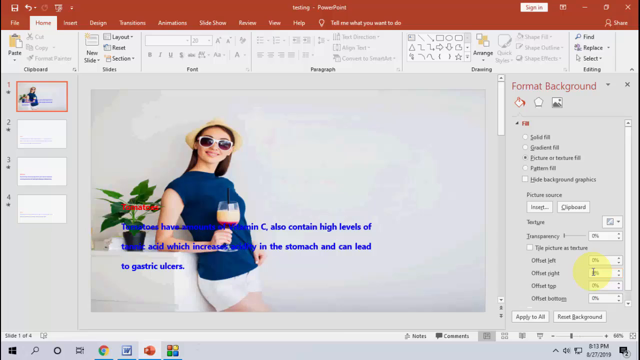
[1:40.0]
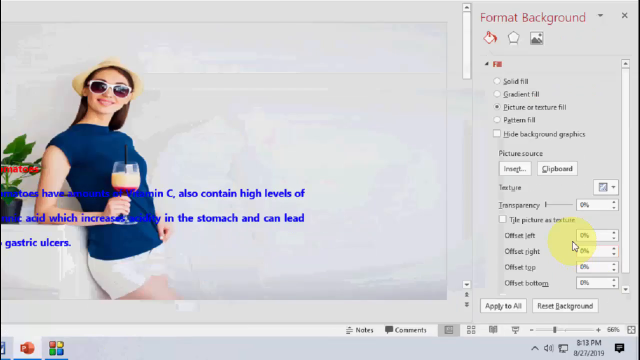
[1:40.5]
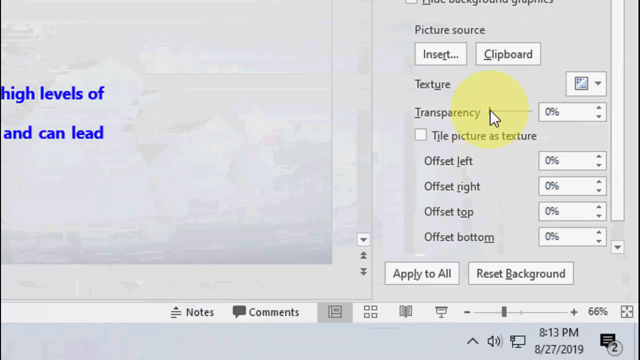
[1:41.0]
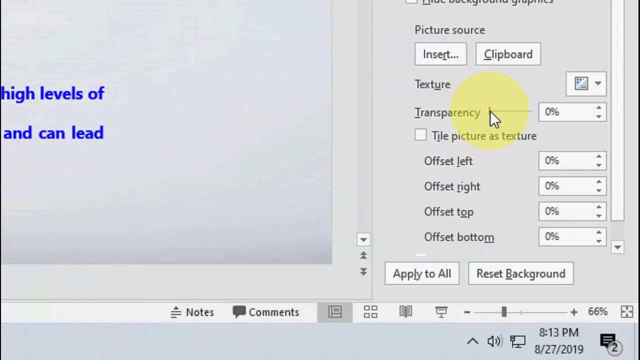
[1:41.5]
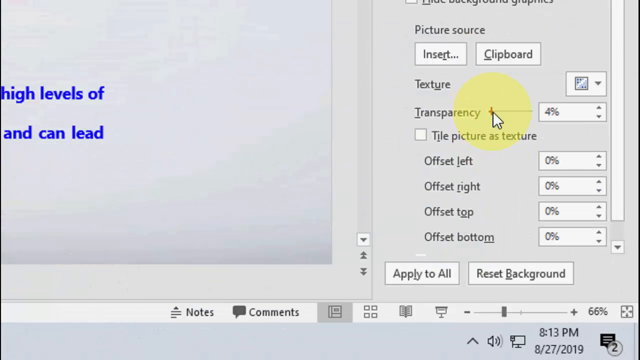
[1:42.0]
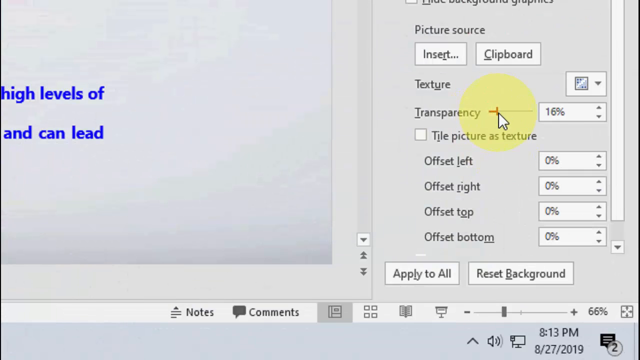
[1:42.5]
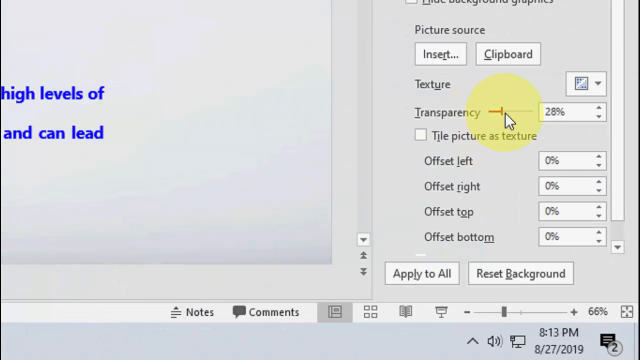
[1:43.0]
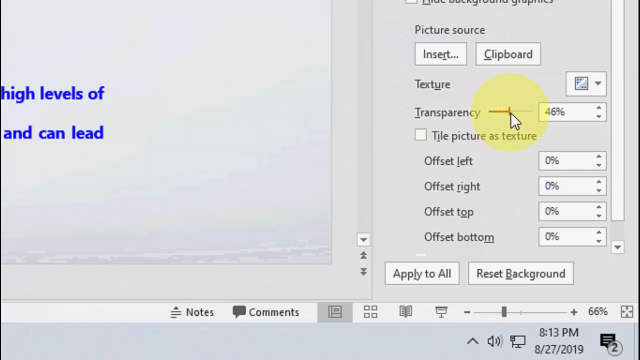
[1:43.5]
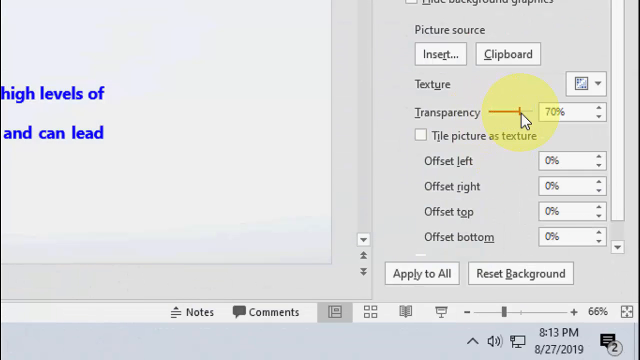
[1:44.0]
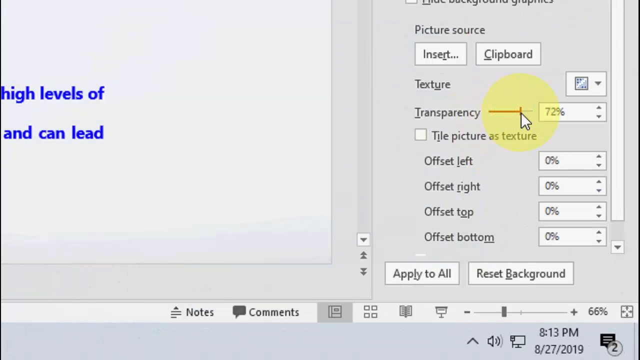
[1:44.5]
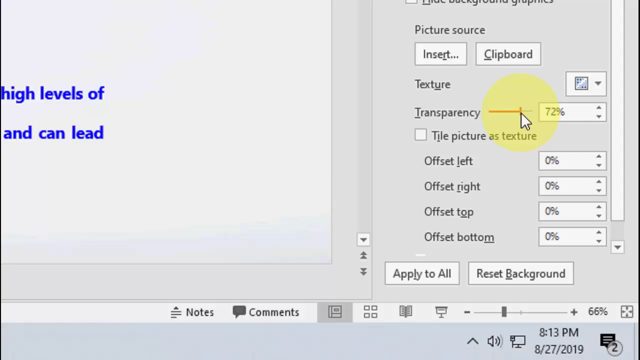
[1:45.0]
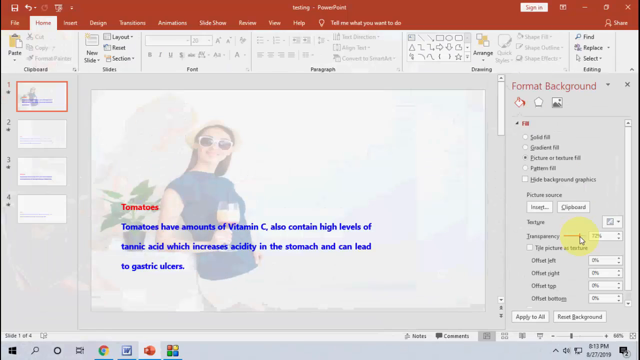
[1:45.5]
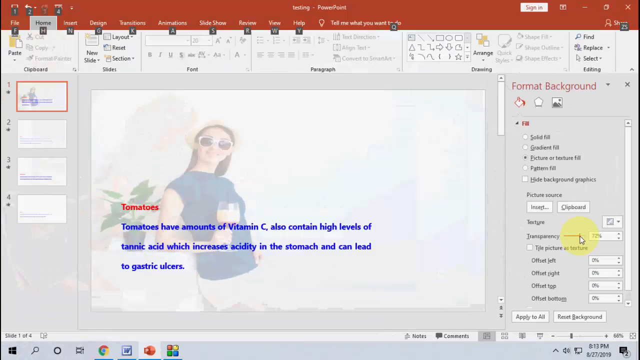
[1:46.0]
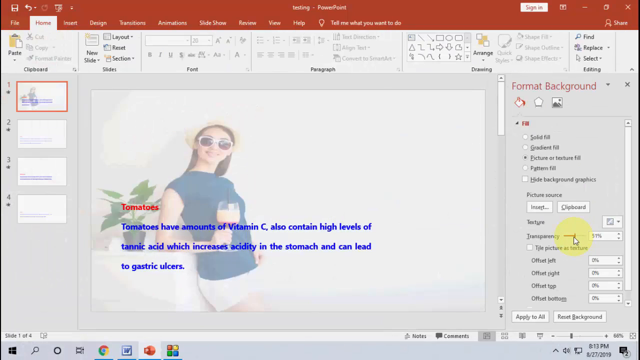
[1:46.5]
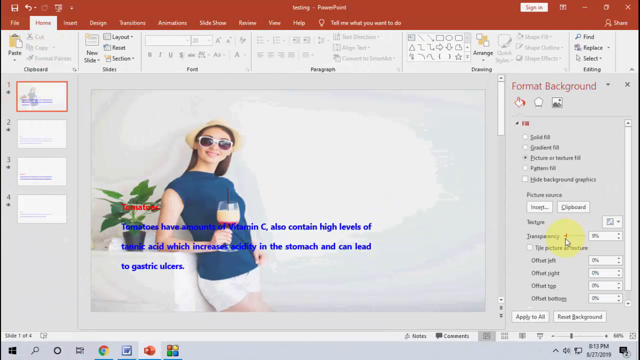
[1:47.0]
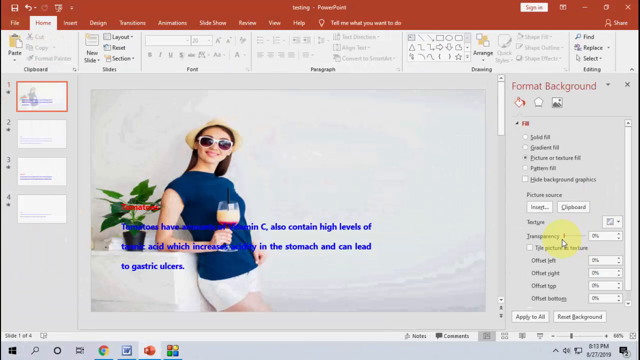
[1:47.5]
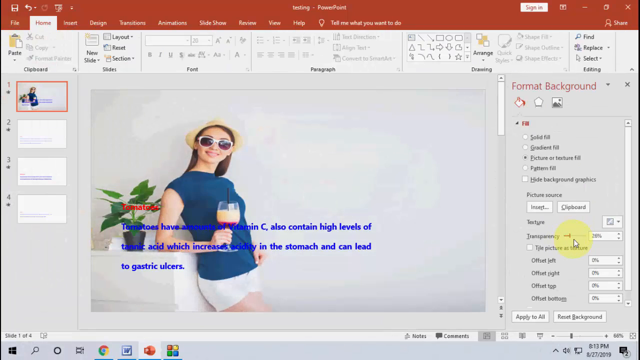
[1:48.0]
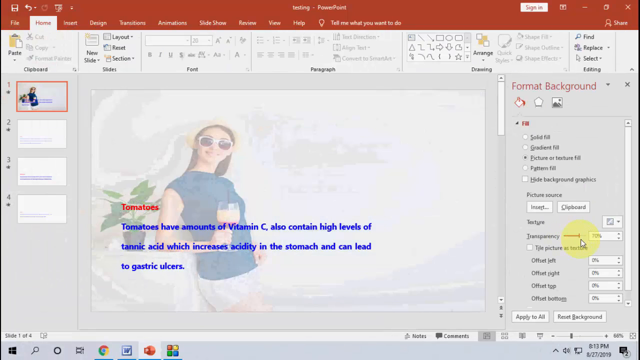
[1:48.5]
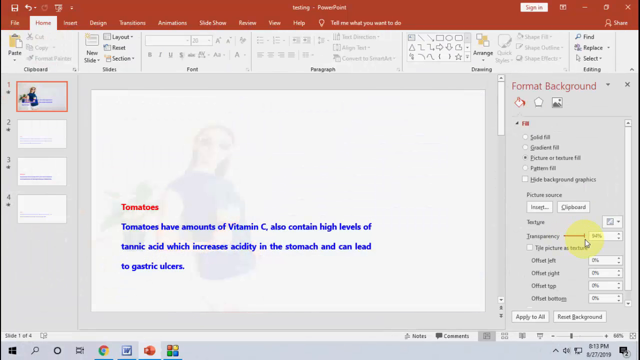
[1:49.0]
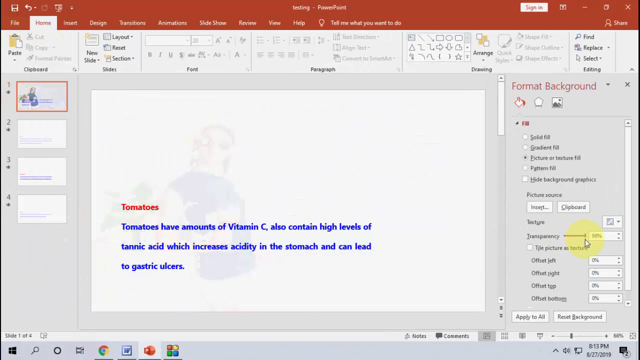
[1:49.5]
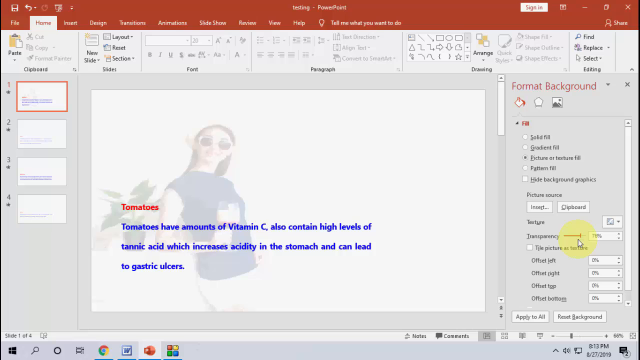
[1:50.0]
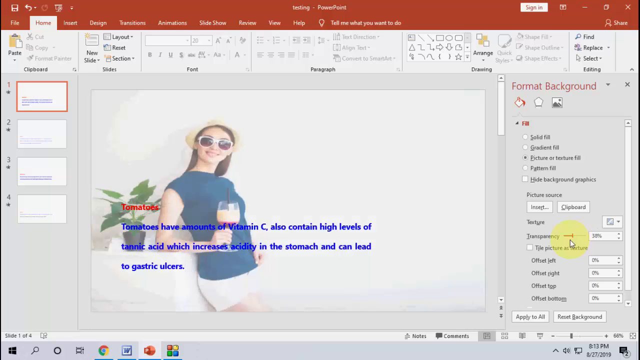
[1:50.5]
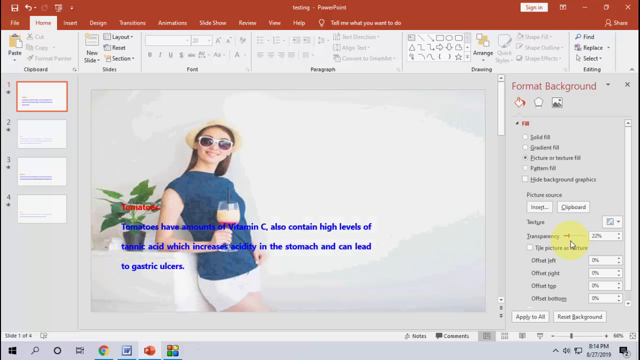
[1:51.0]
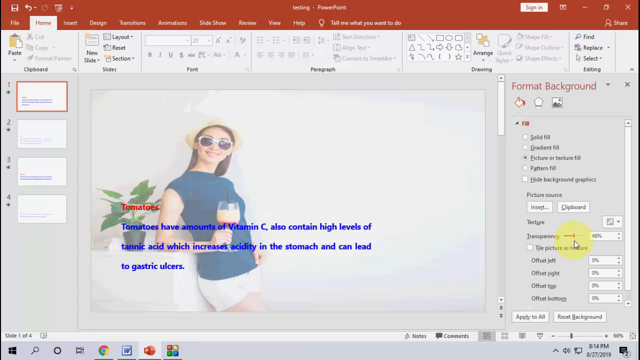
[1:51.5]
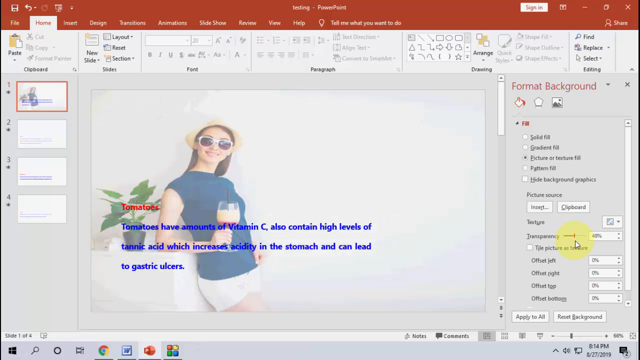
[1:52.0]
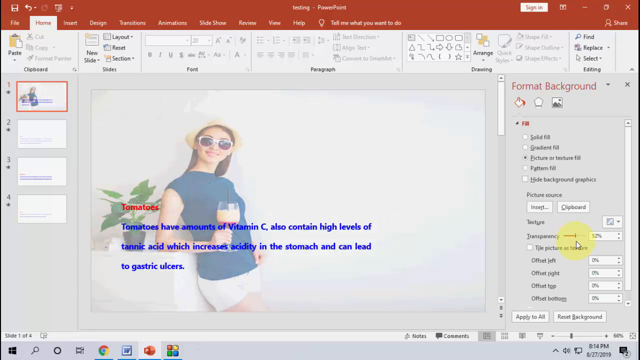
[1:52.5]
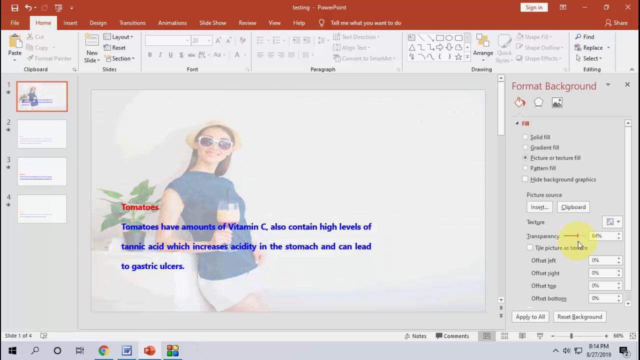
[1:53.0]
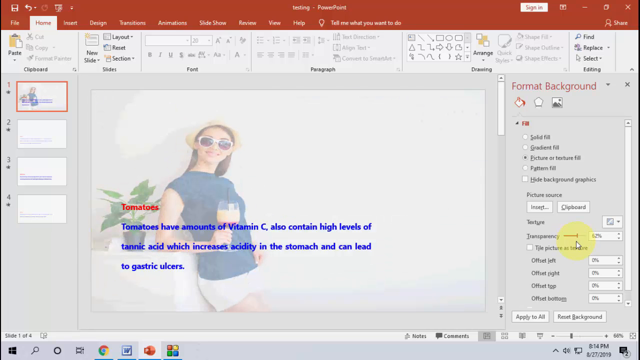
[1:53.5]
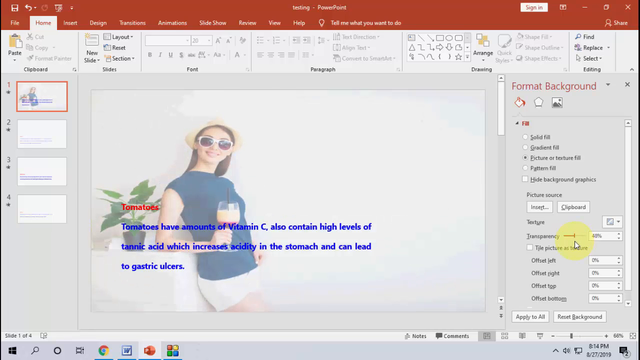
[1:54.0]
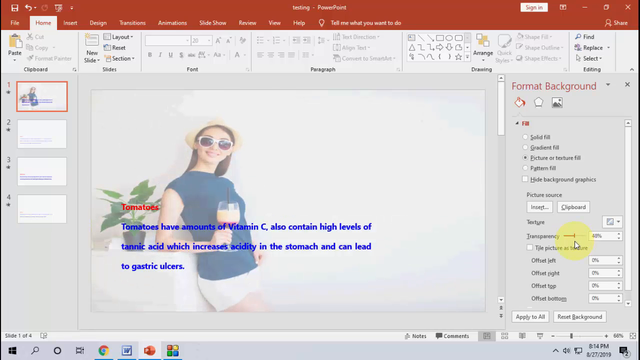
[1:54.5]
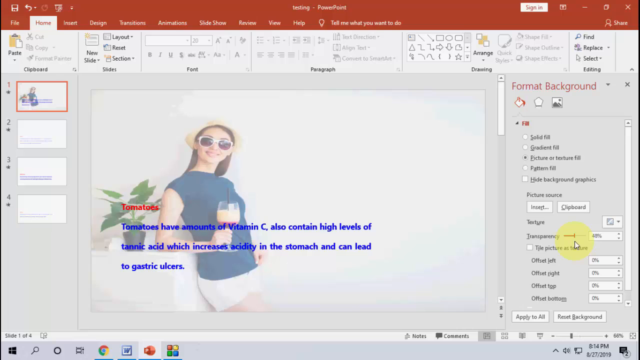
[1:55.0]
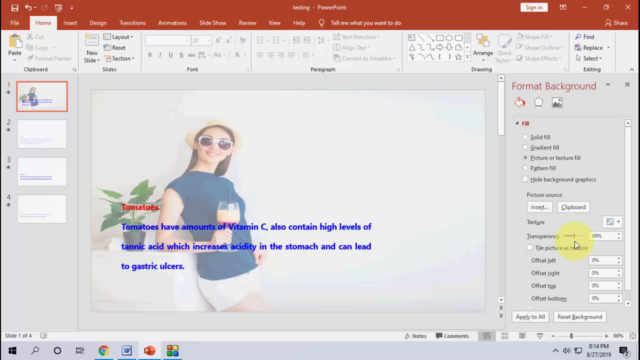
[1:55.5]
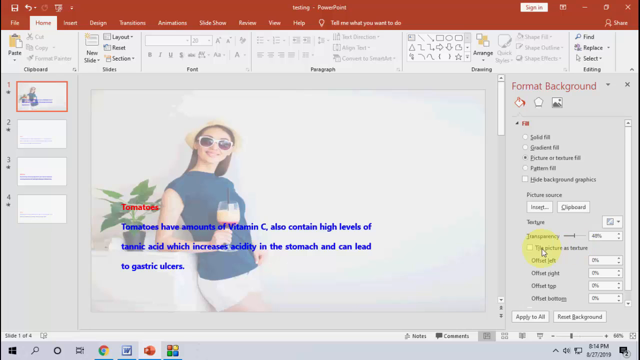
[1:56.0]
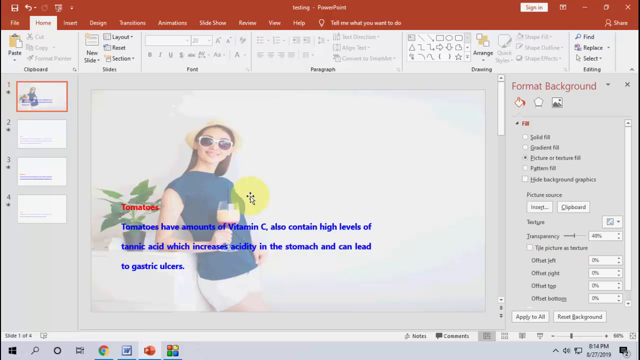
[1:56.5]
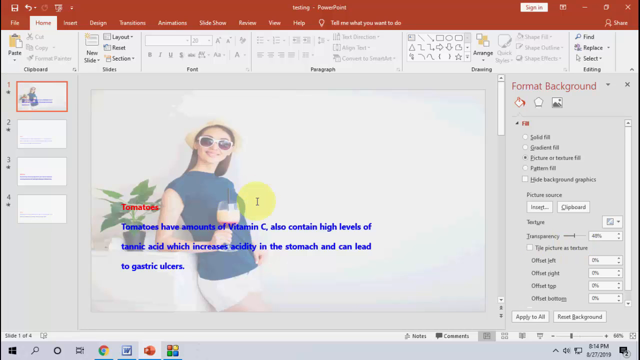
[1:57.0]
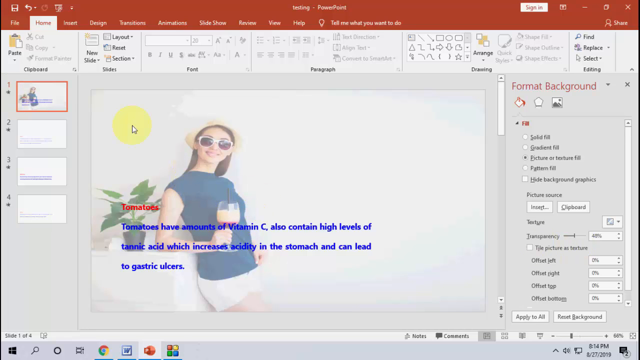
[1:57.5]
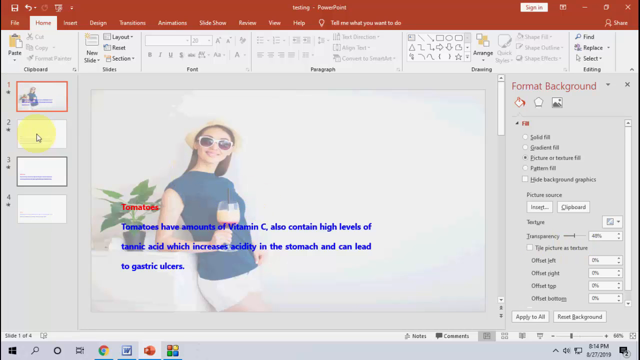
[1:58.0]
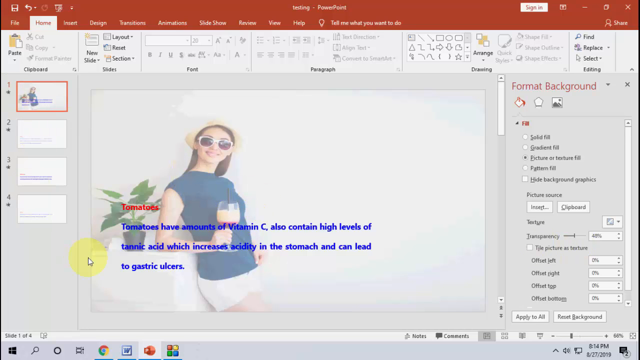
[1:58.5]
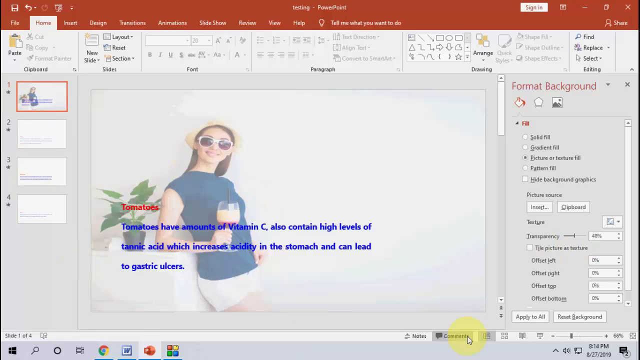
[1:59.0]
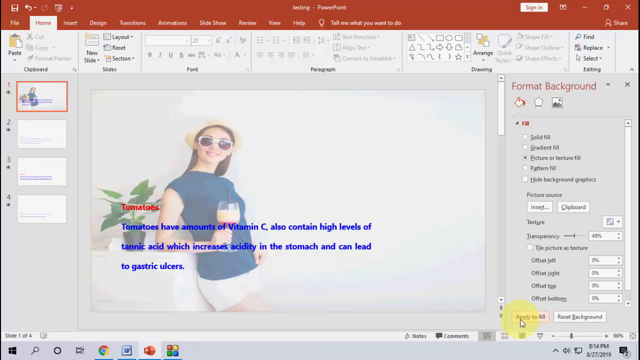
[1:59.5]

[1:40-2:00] The cursor is on the right side of the PowerPoint screen and the view zooms in on an option titled "Transparency", a checkbox that says "Tile Picture as Texture", and options "Offset Left", "Offset Right", "Offset Top" and "Offset Bottom", all set to 0%. The cursor hovers over Transparency and drags the bar to the right until it reaches 72%, then the view zooms out to show the picture now transparent. The cursor goes back and forth adjusting the transparency, and the picture becomes more or less visible; the image of the smiling woman sometimes seems to fade into the background and at other times appears sharper and clearer. The cursor goes over to the left side of the page, back to the right, and hits "Apply to All". On the right side of the page is the red header "Format Background" and the word "Fill" in red, with options including Solid Fill, Gradient Fill, Picture or Texture Fill, Pattern Fill and Hide Background Graphics, plus an option to choose a Picture Source and make other adjustments. A toolbar with more options runs along the top.